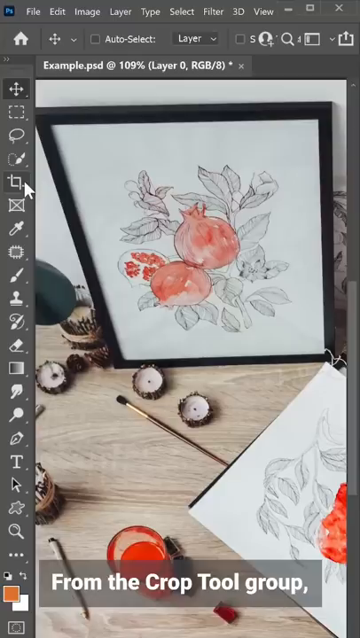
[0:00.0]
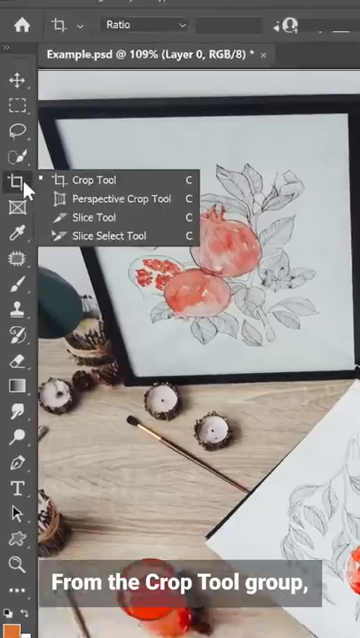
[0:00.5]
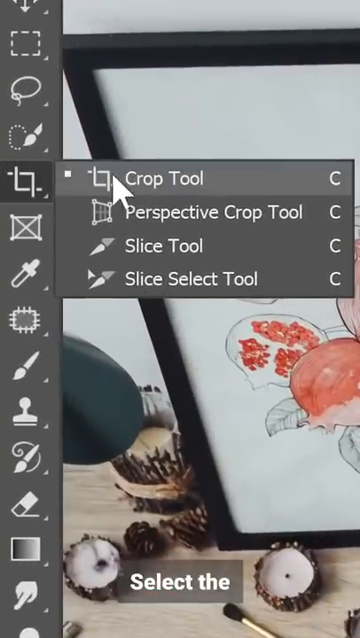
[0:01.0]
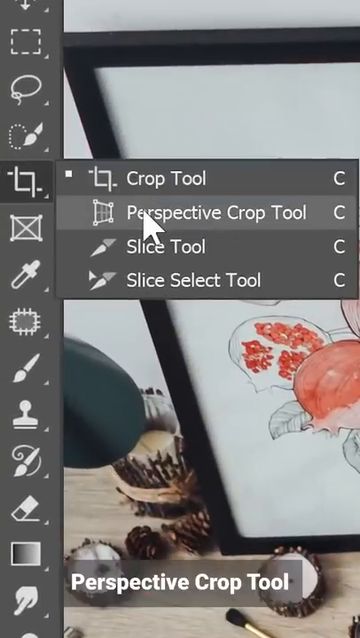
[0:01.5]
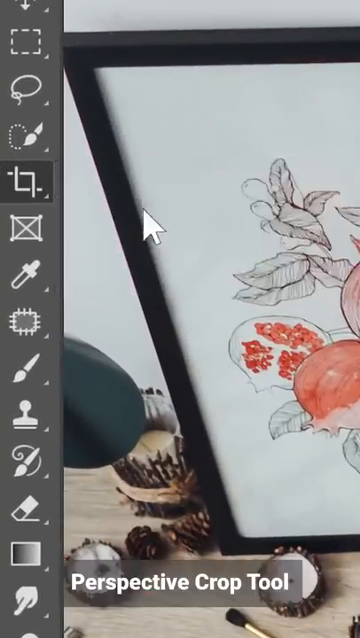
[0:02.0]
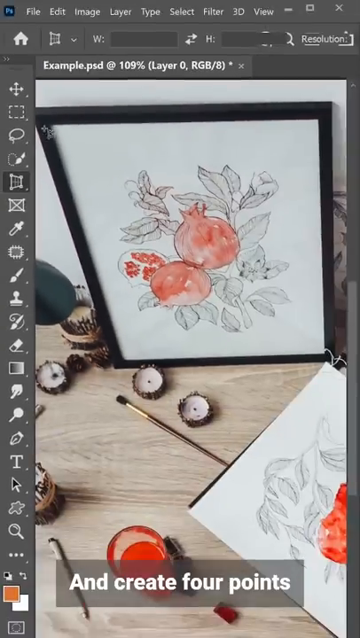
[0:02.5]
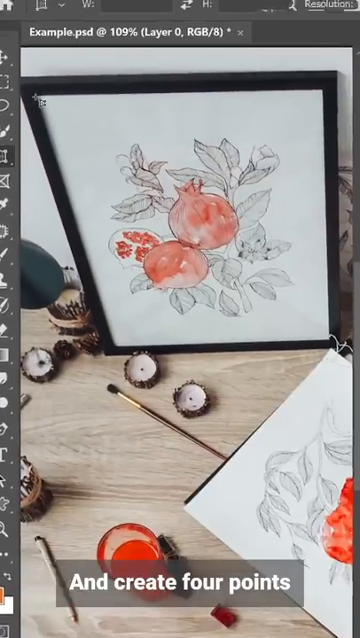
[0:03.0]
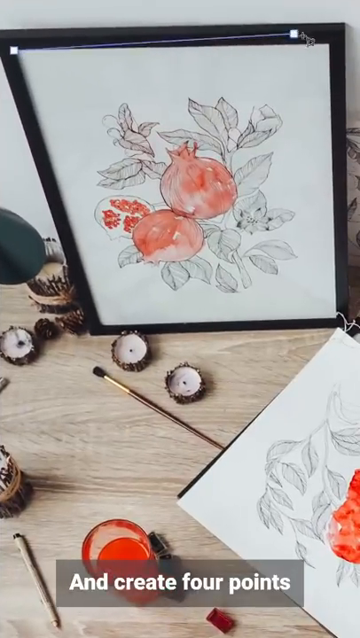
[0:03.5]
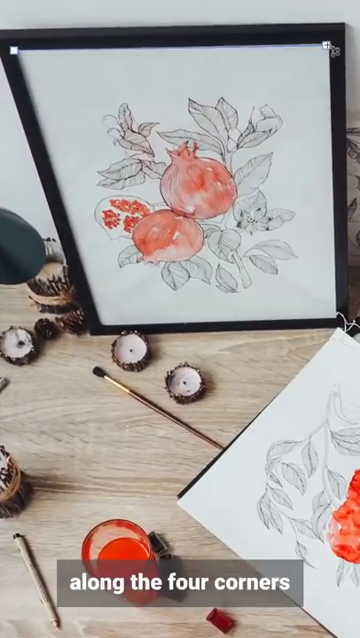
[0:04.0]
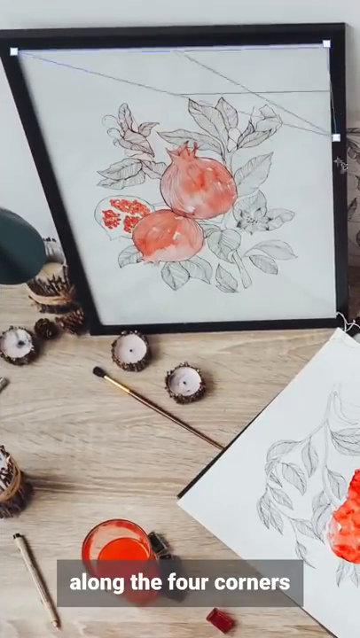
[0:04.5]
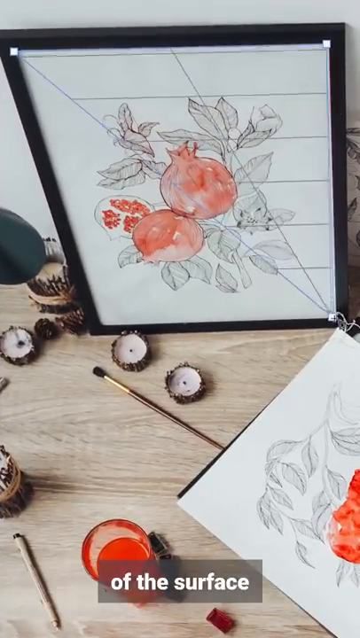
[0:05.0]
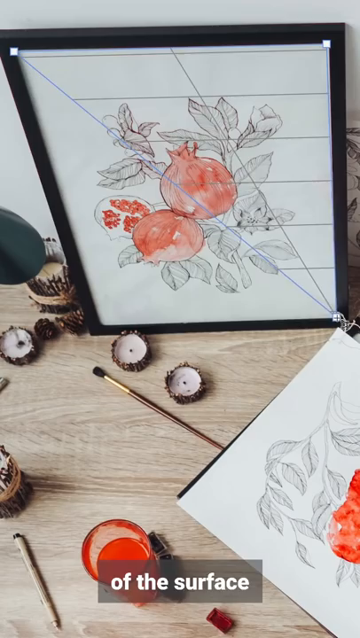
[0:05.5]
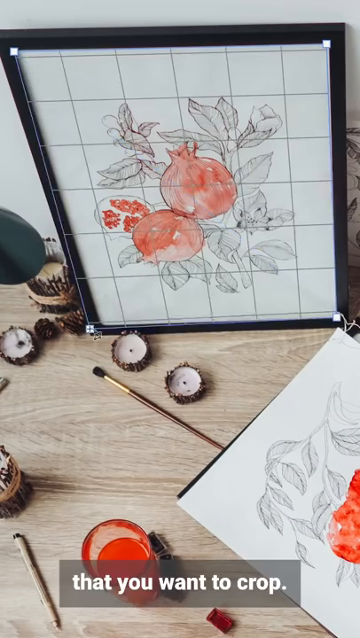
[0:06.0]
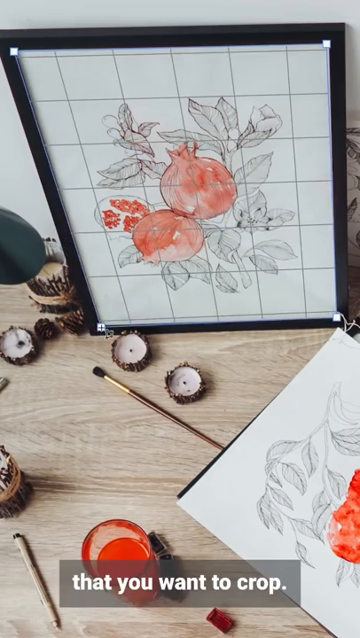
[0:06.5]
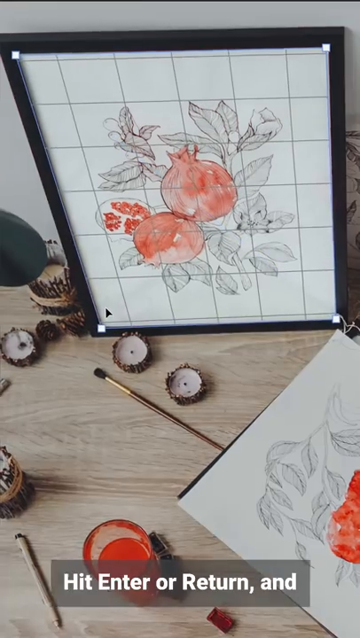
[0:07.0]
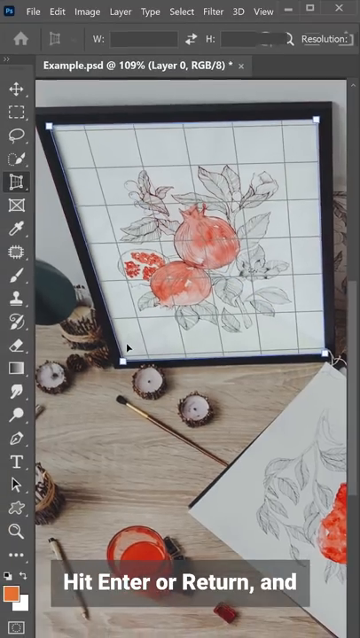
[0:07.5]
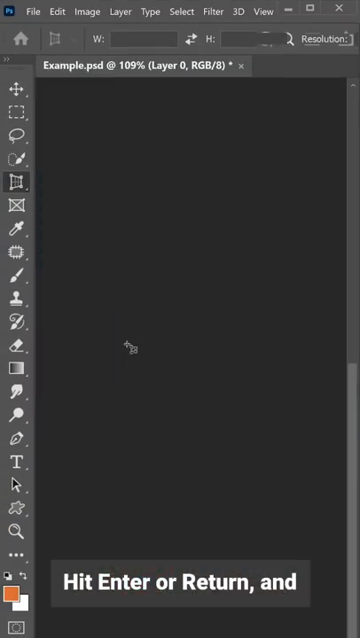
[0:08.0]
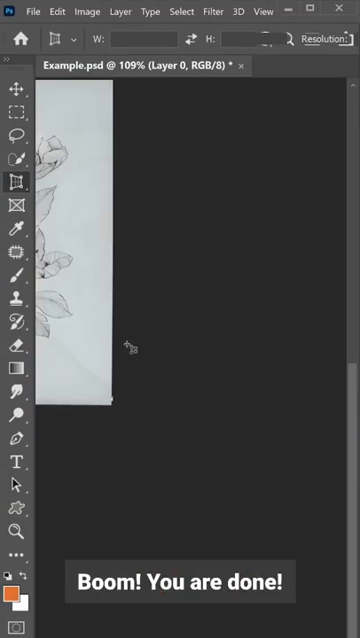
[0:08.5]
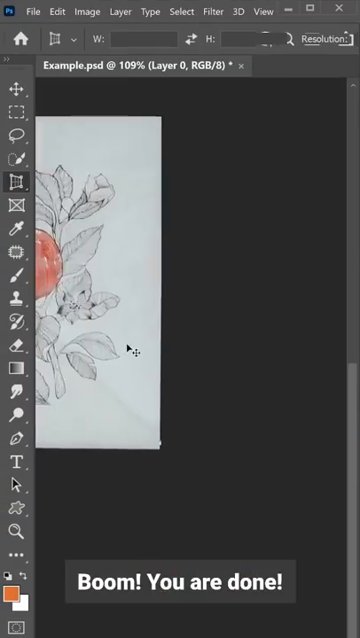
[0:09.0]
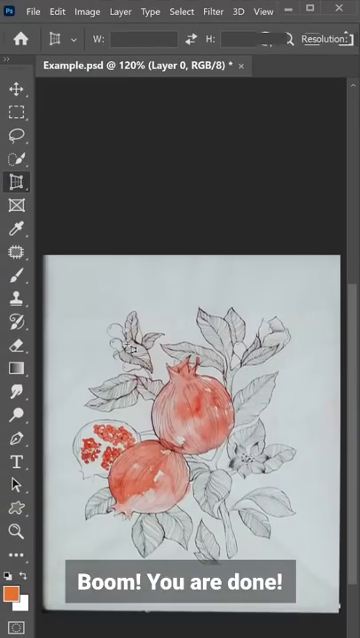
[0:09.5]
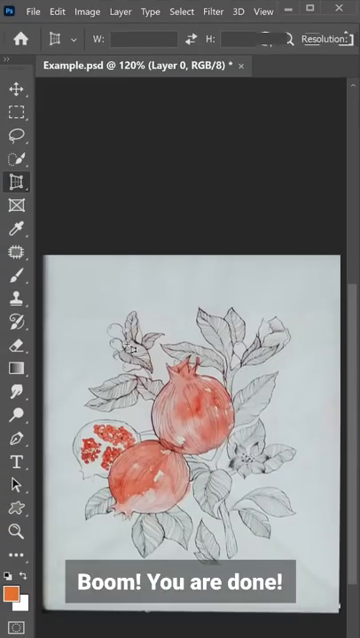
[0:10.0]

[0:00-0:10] A video demonstrates how to Photoshop something. The first image is a line-drawn pomegranate in which only the pomegranate has color. On the left-hand side of the screen are the navigation tools for cutting, trimming, pasting, slicing and so on. The picture is then shown as if it had been photographed in a frame sitting on a desk with some paintbrushes and colors, and the picture is extracted out of that picture of the room and cropped, creating something different altogether. Text on screen says "Perspective Crop Tool", and a grid is dragged so that the image that looks like it is in the picture frame on the desk is extracted by itself and cropped on the computer.